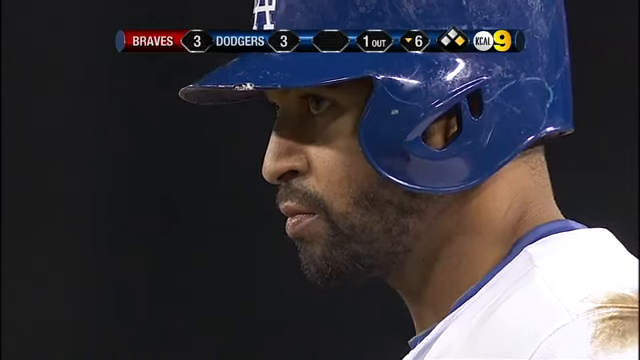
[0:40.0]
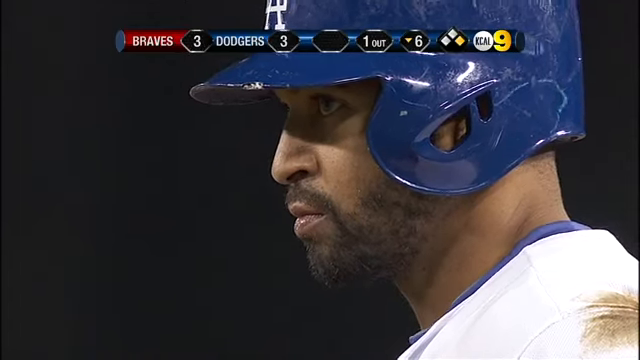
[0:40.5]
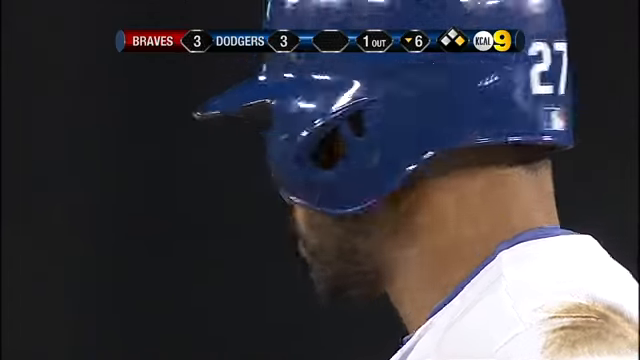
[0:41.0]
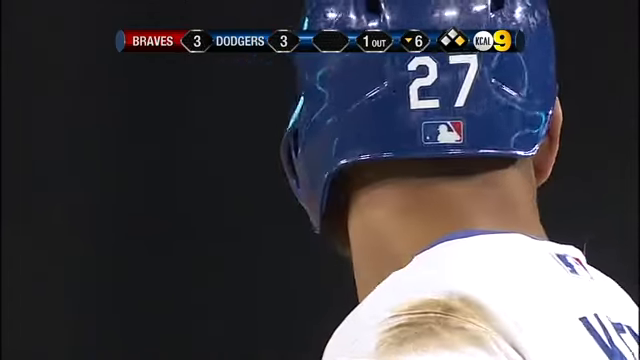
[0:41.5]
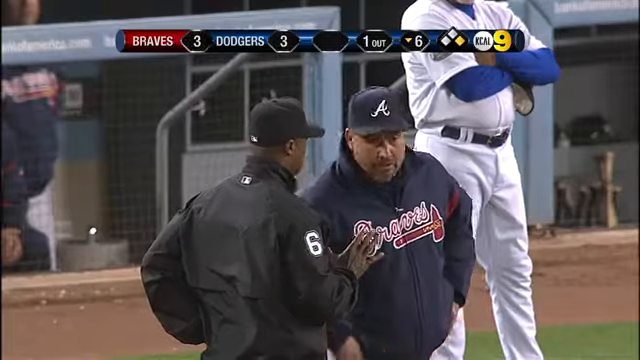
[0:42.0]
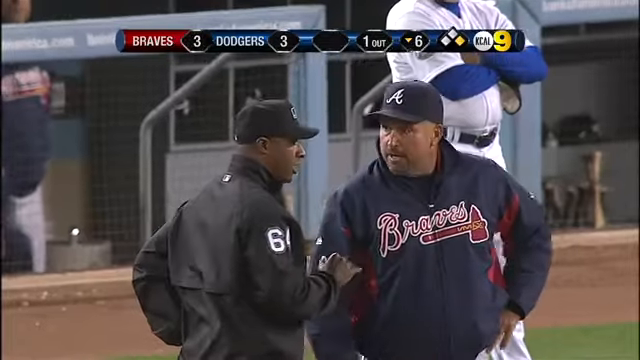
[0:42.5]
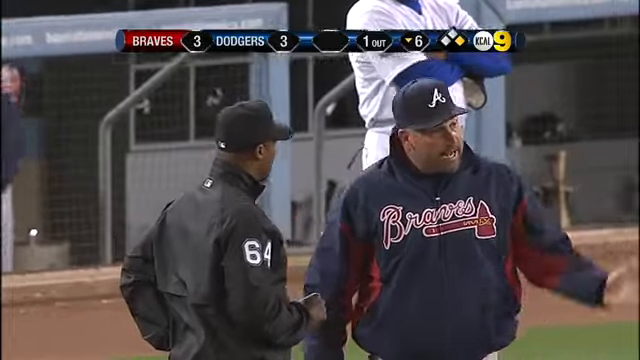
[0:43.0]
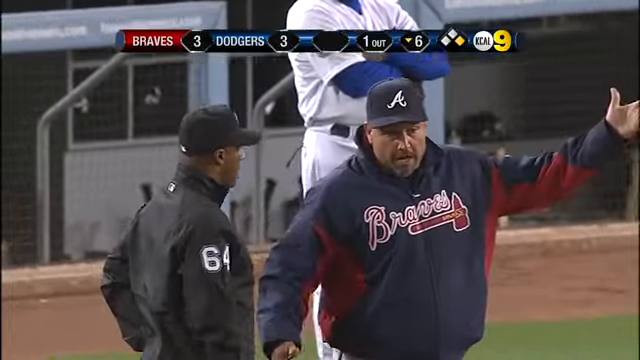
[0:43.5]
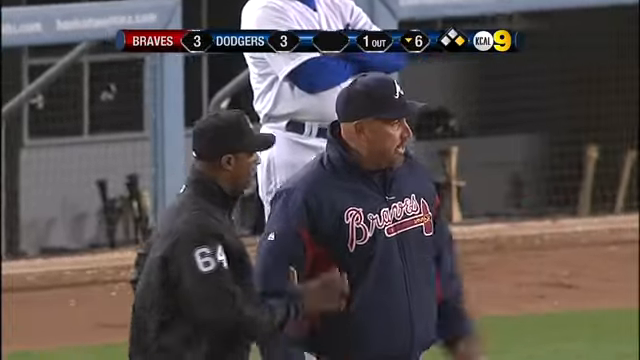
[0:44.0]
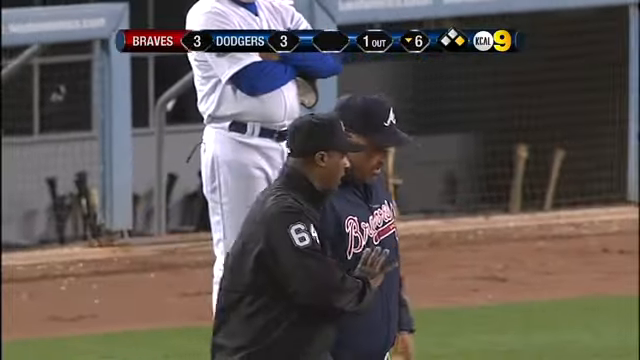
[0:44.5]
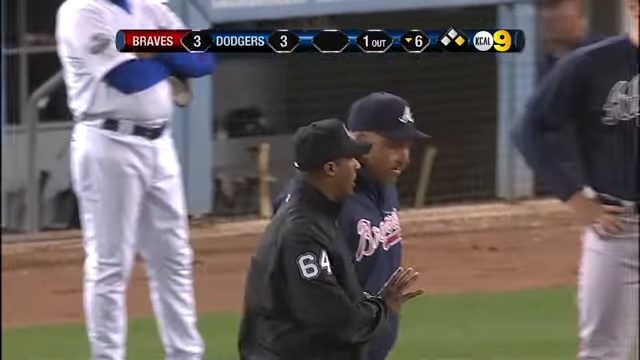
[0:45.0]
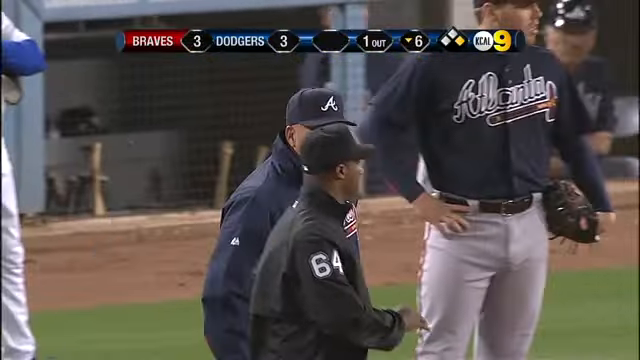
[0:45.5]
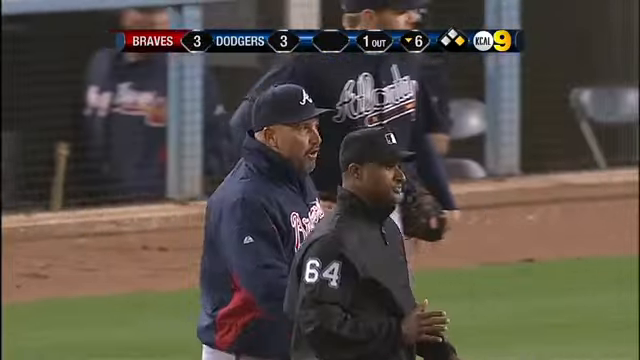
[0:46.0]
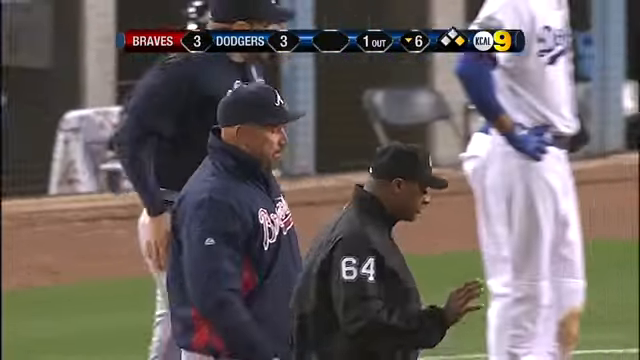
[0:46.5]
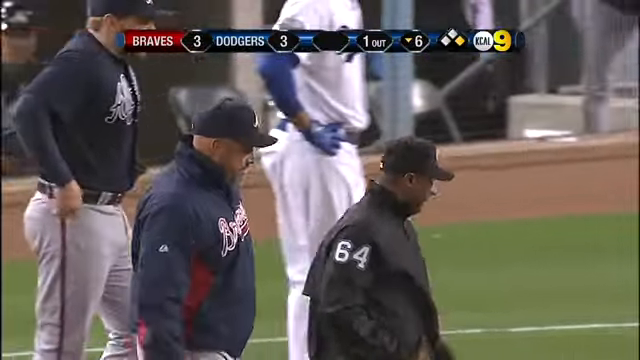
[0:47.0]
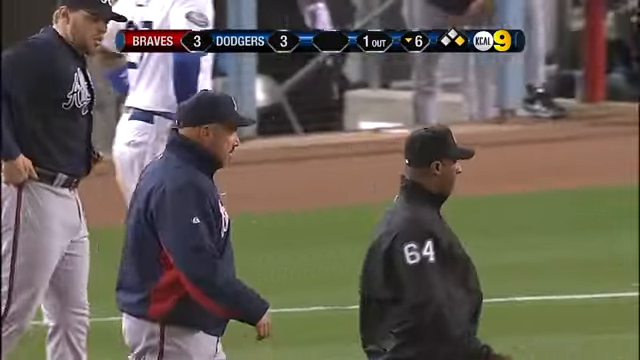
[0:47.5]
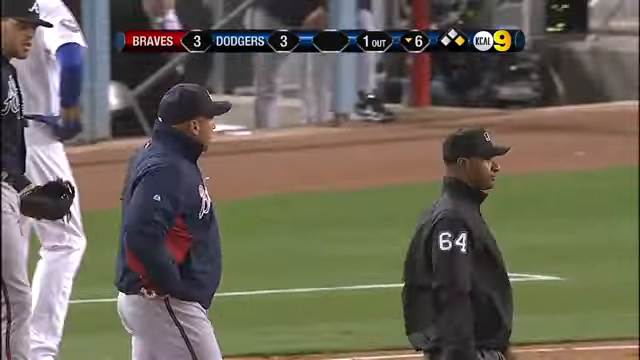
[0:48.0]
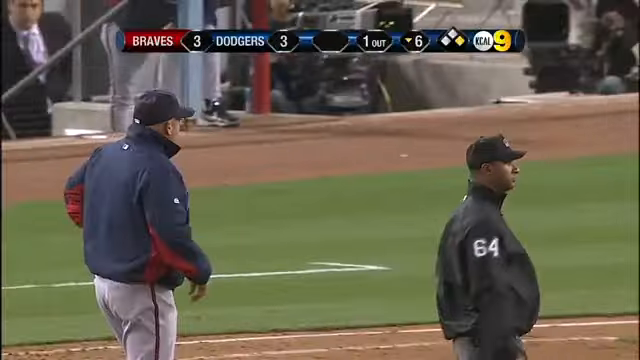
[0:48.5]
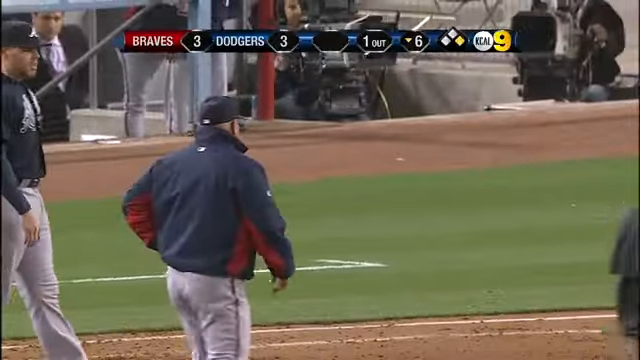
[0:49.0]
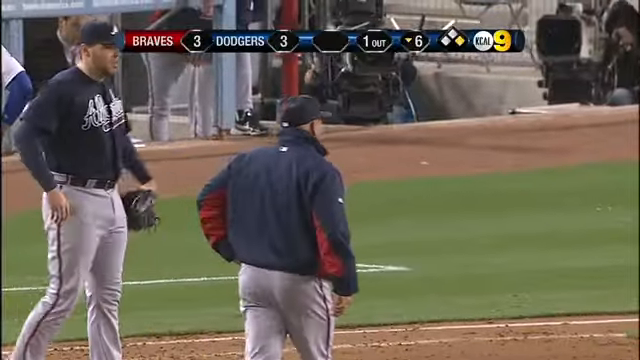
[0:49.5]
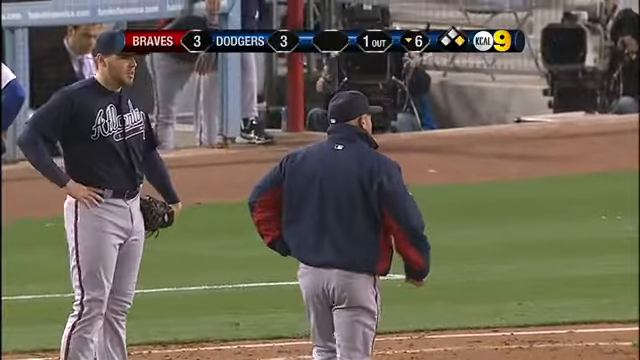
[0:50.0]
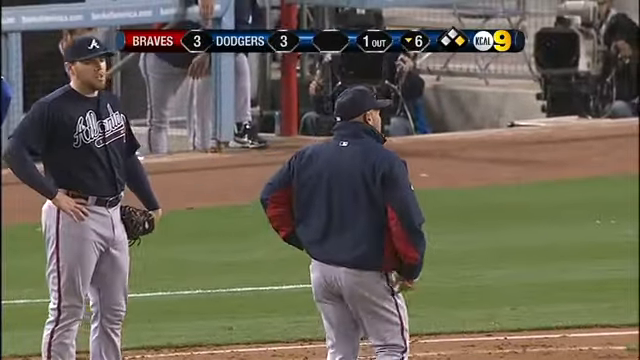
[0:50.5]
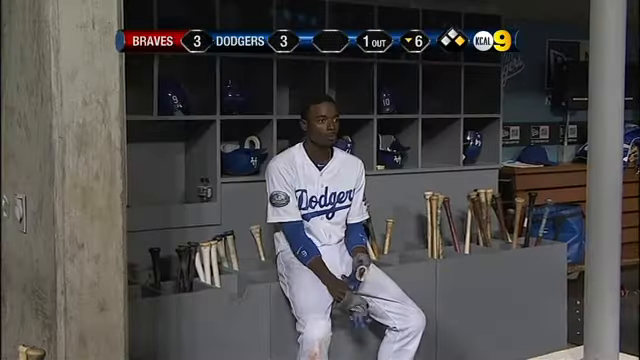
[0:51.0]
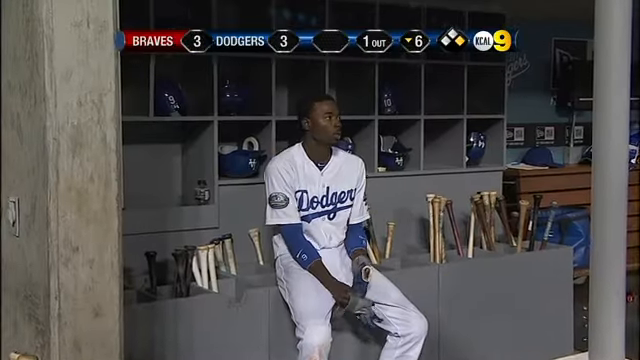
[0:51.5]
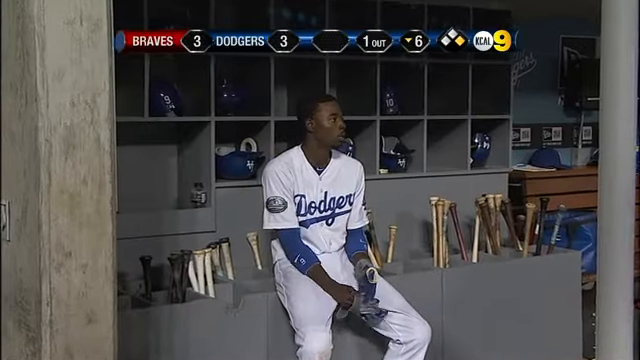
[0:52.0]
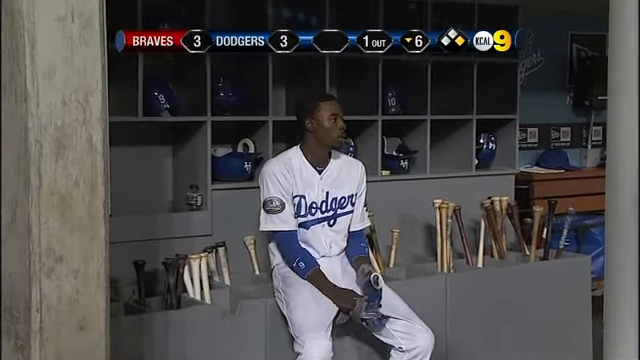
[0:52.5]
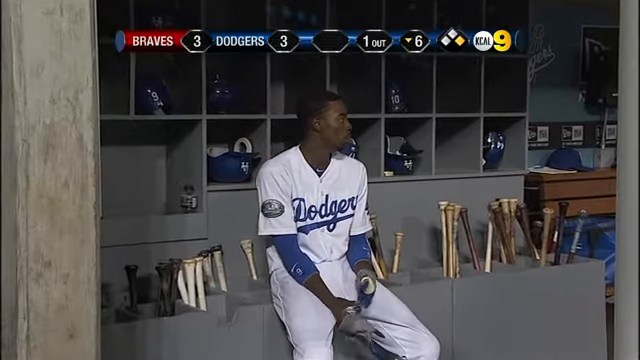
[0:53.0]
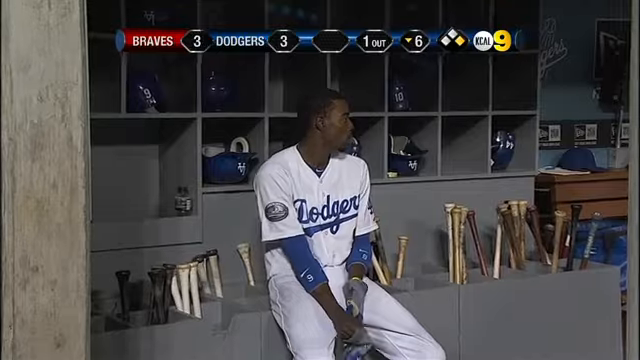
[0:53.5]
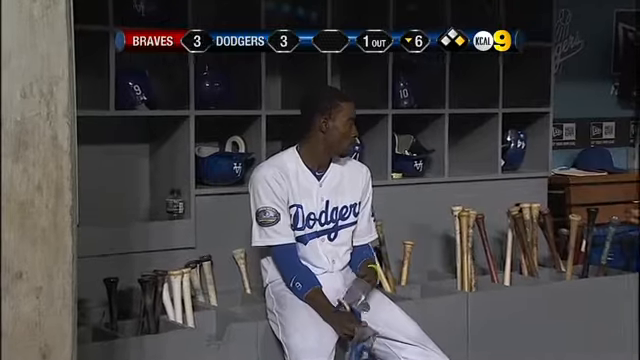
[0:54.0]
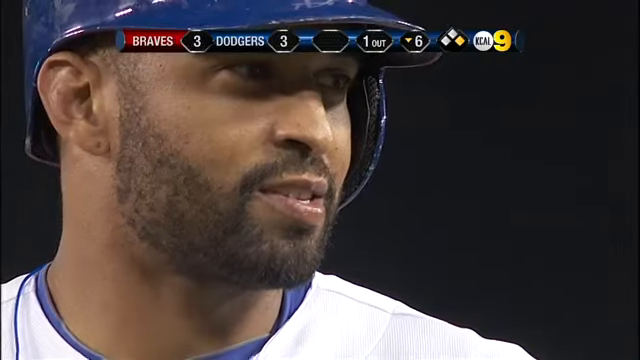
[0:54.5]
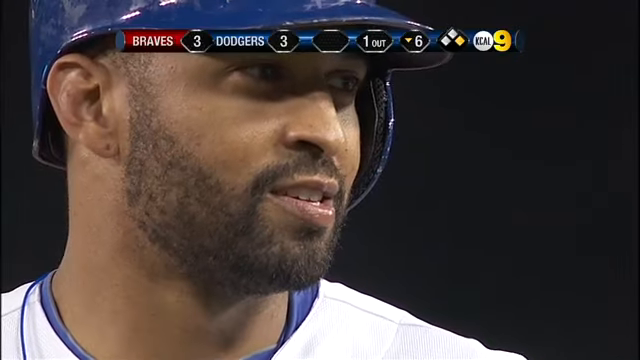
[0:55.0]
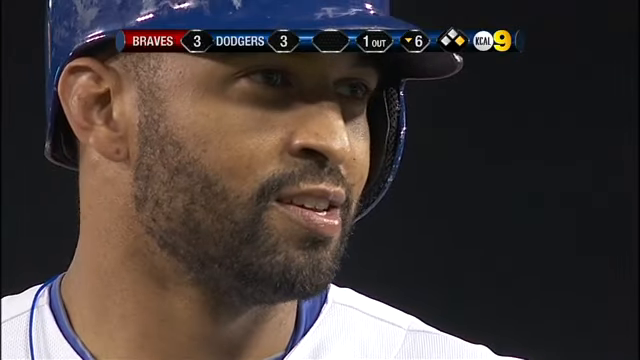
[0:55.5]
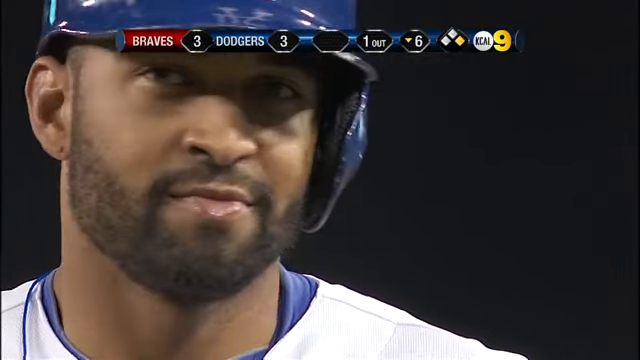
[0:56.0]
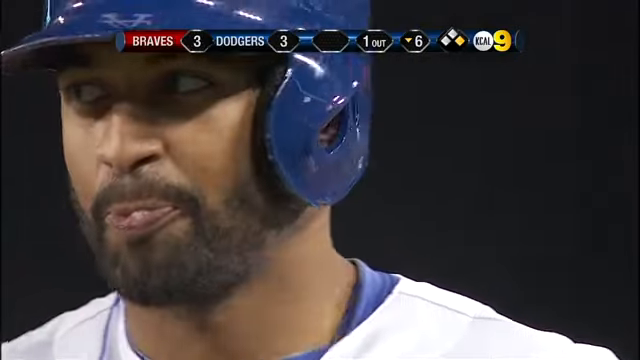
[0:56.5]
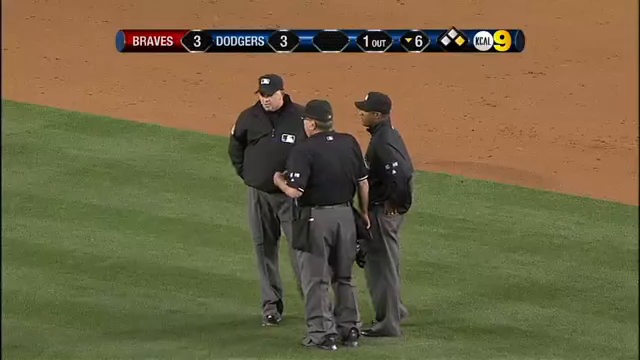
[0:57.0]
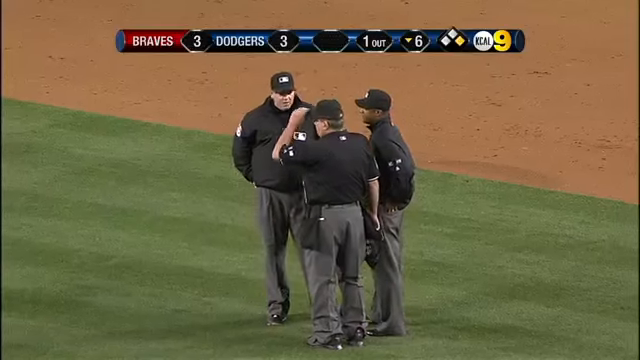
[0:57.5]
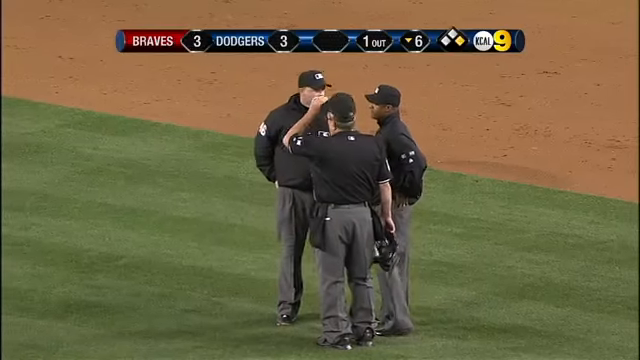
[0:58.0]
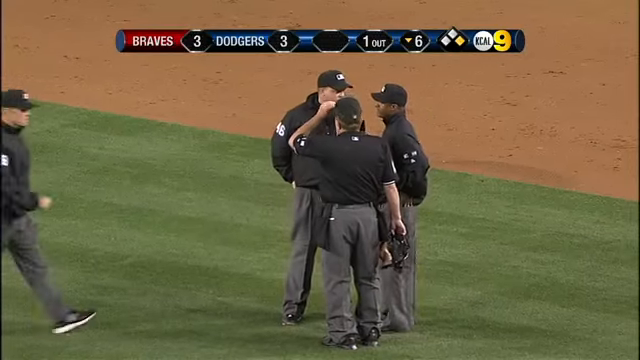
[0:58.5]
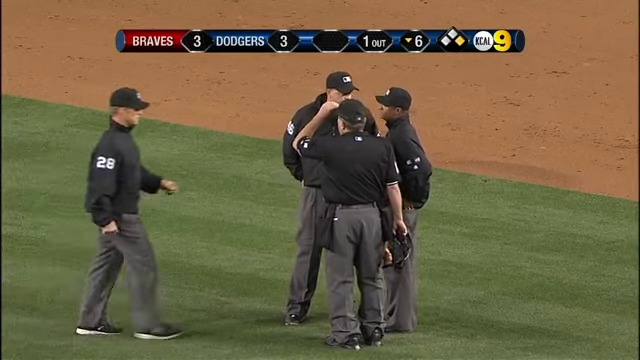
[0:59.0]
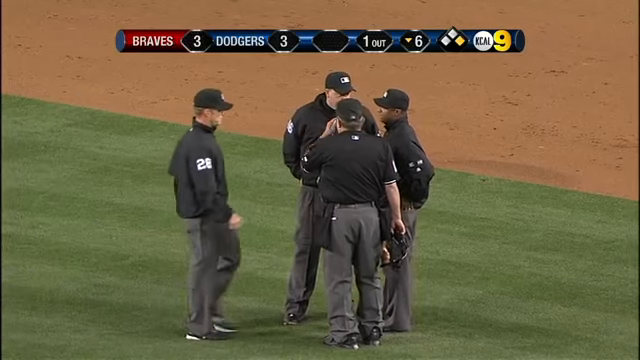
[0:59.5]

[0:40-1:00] Against a black background, likely night, a headshot shows a baseball player turned to the left. He wears a white jersey with a little dirt on his neck, a collar with a thin blue line at the top, and a medium blue helmet, and he looks very serious. He then turns to the right, revealing a white number 27 on the back of his helmet. In another shot, what looks like a ref on the left wears a long-sleeve black coat with 64 in white on the shoulder and a black baseball cap. Turned to the right, he talks to a man facing roughly toward the camera, who wears a black baseball cap with a white cursive letter A and a dark blue and red coat with "Braves" in cursive on the front and a tomahawk logo below it. This man talks quite aggressively, holding his left arm out to his side, then turns toward his right and walks to the right with the first man. The camera zooms out, and the video moves to a man sitting on a gray cabinet holding a bunch of bats.